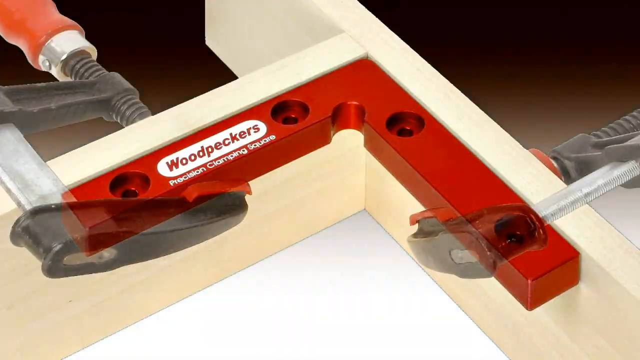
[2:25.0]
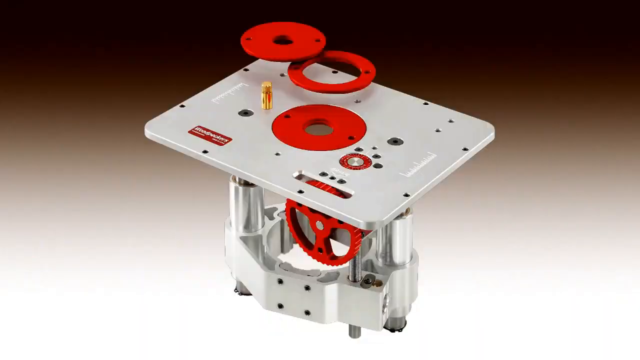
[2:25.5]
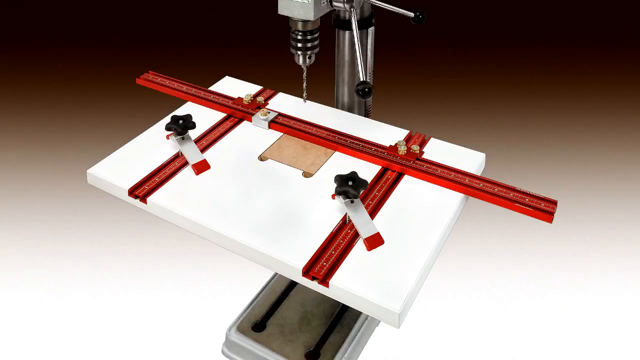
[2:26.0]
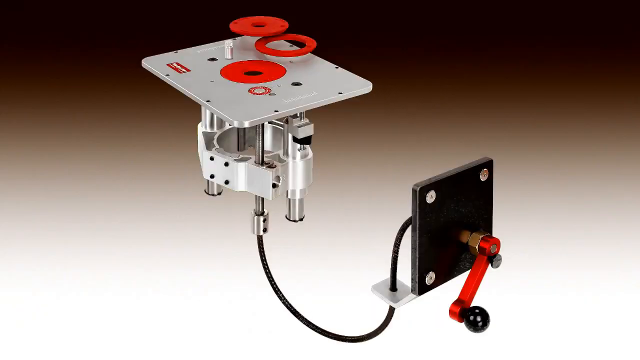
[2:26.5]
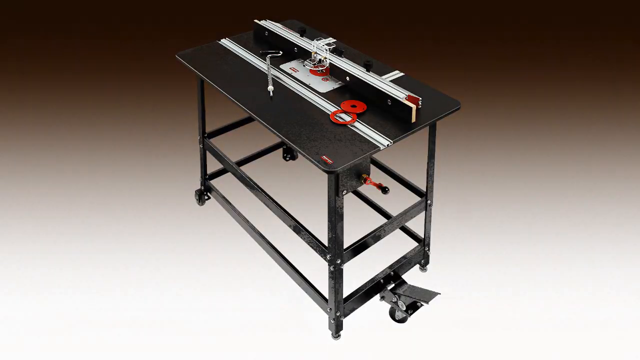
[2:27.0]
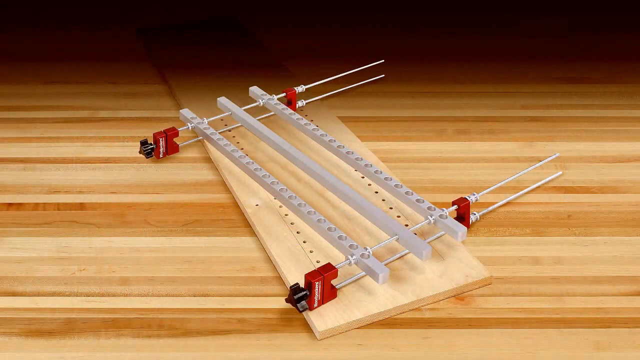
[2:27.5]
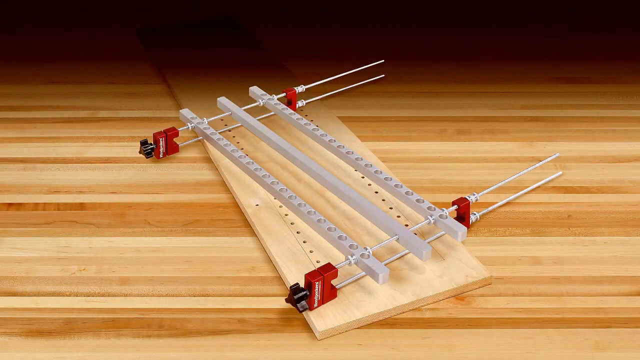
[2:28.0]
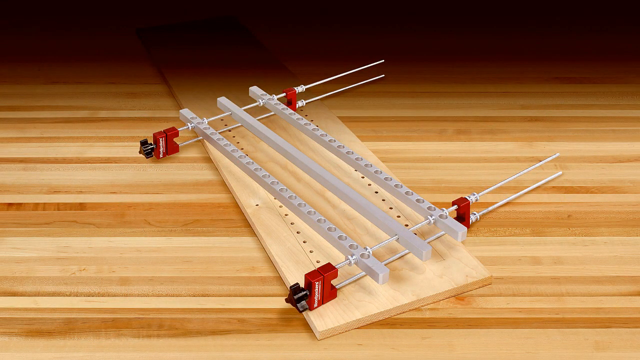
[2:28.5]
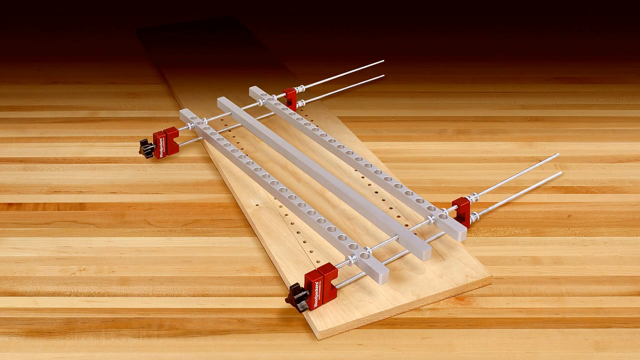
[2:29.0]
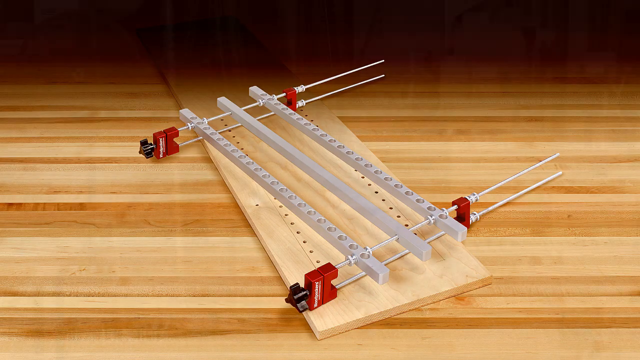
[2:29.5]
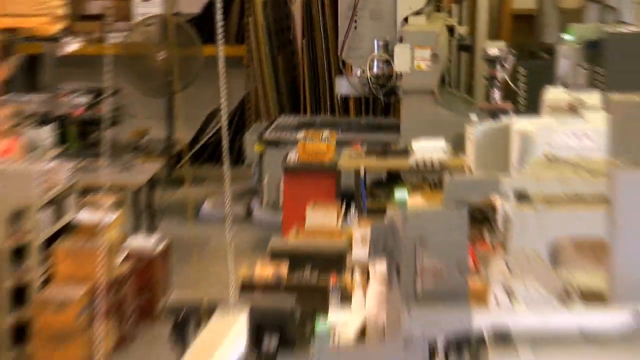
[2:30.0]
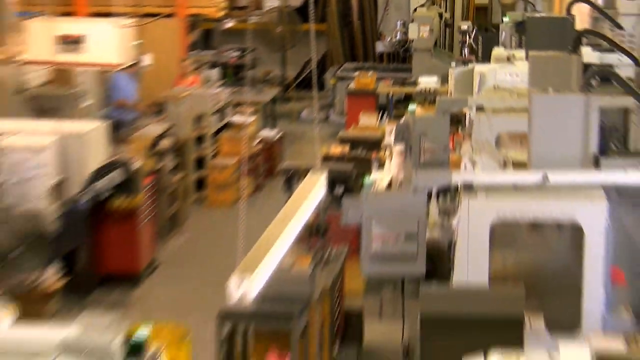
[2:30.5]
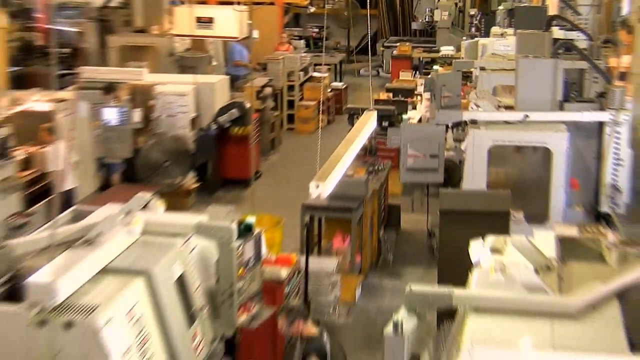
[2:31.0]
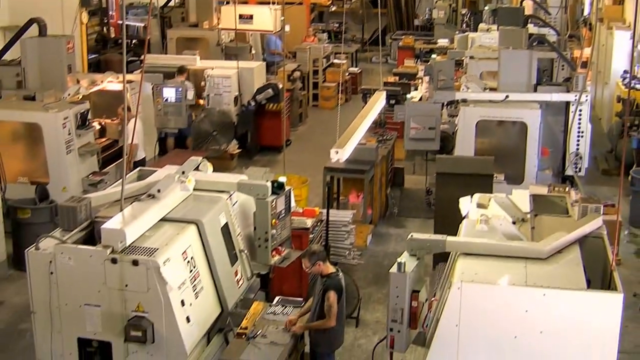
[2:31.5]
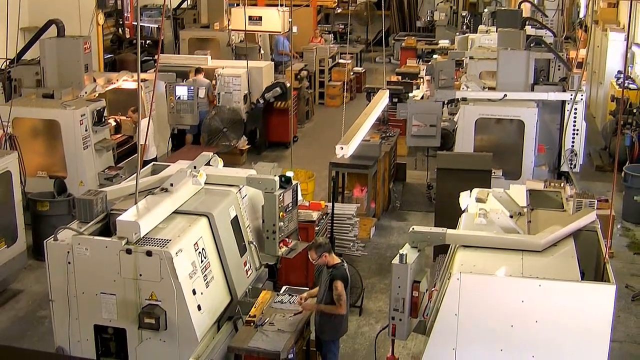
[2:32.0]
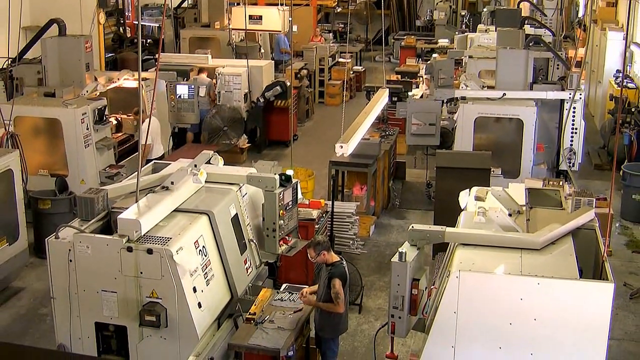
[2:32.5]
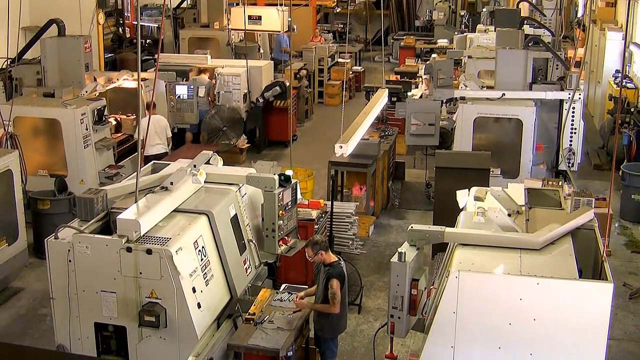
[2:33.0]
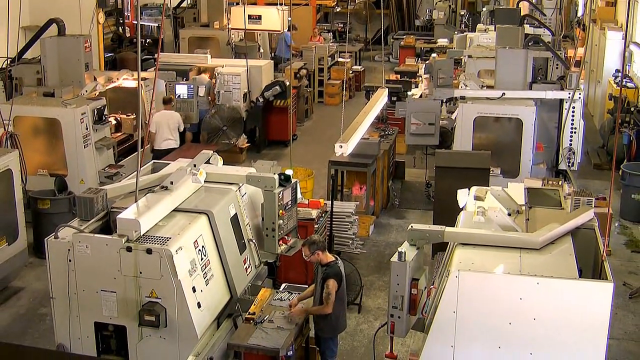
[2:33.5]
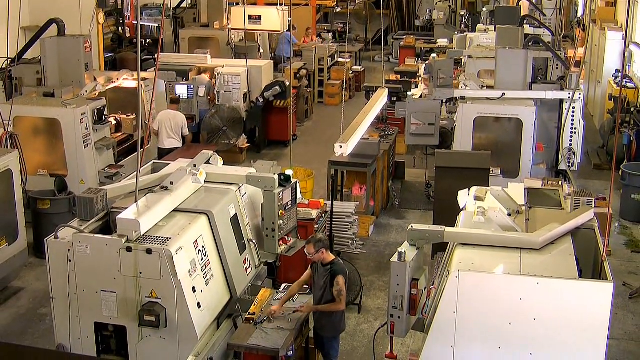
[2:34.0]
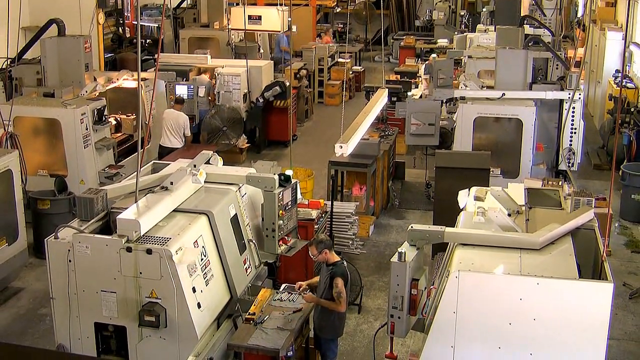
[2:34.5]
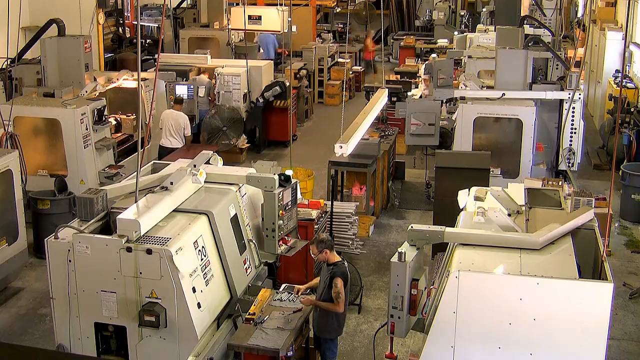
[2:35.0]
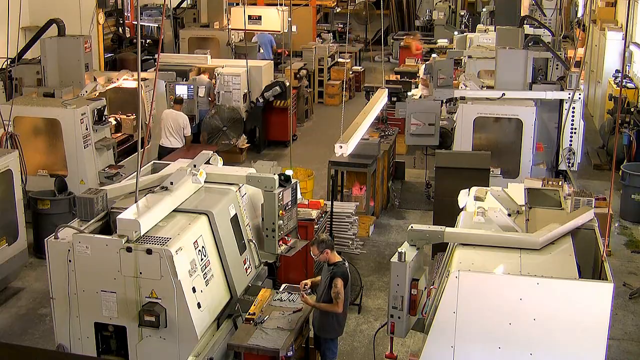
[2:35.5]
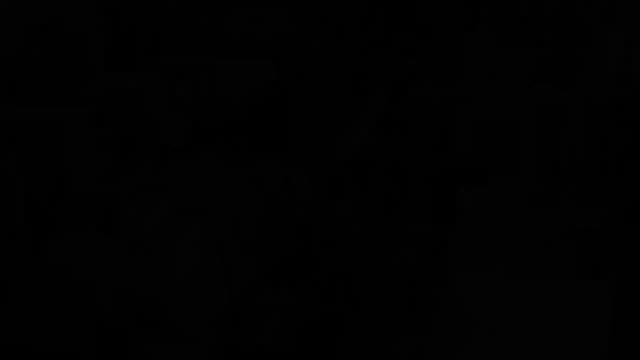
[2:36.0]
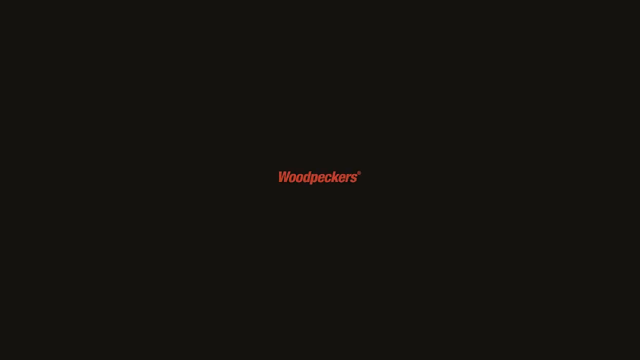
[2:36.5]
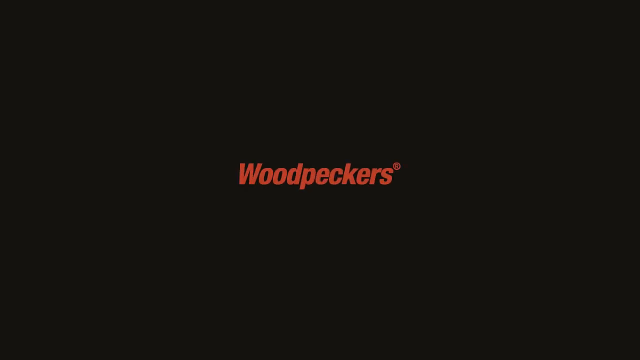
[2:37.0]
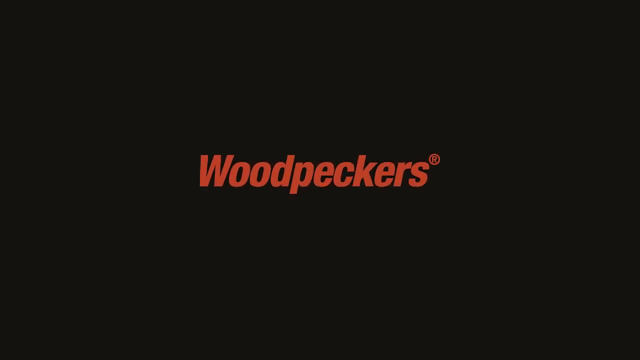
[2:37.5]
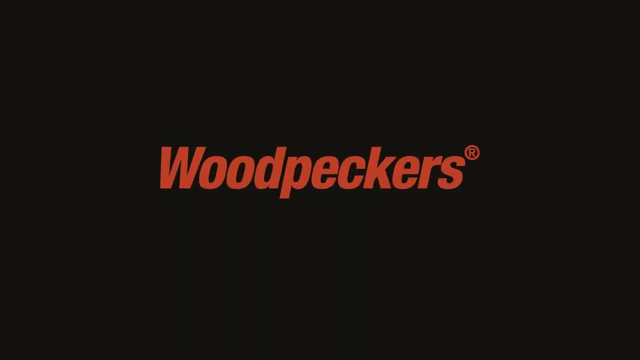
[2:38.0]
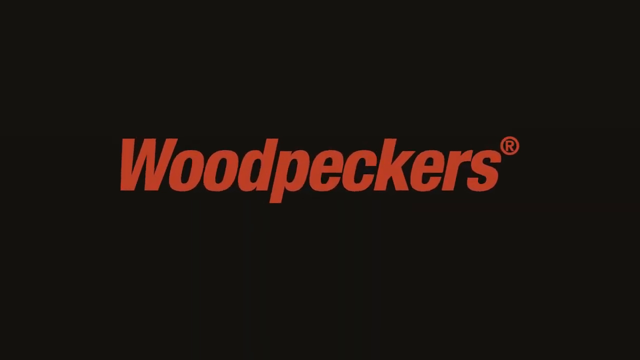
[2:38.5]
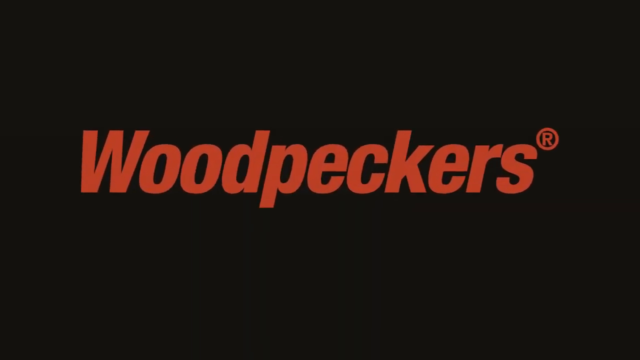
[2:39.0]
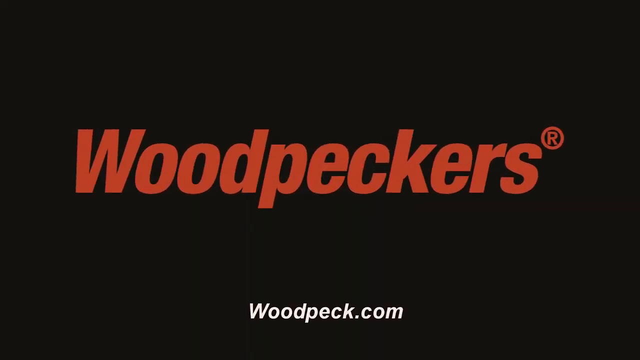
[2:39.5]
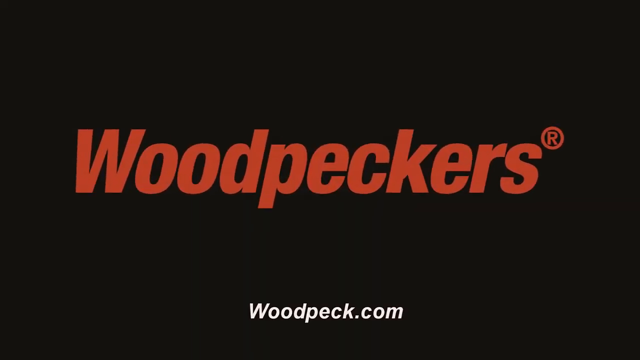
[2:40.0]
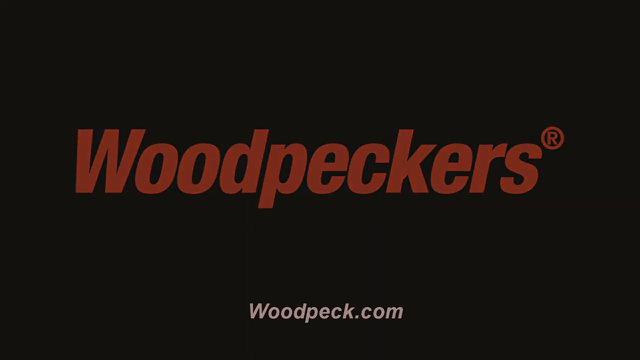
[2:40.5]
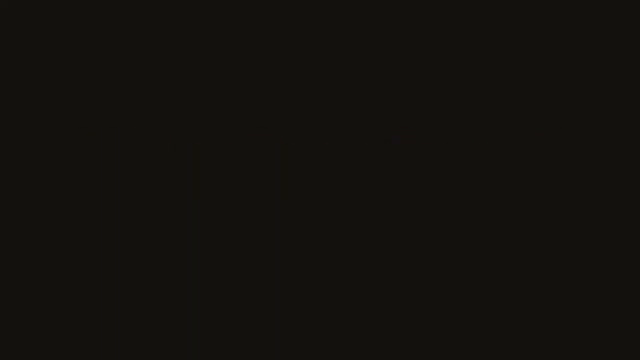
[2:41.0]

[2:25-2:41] A bunch of different tools, apparently made by the same company, are shown quickly, including all kinds of drawing tools. Then the manufacturing shop appears, with a bunch of men working on big, heavy equipment that looks like it makes precision tools. One man in particular is shown close up, though not in great detail, working at a machine. At the very end, text reads "woodpeckers, woodpeckers.com", and in the bottom right corner is a red square with "woodpeckers" in white on the diagonal.